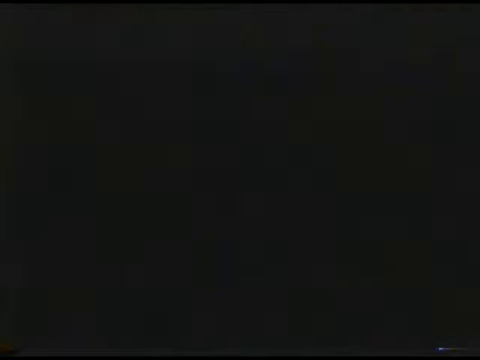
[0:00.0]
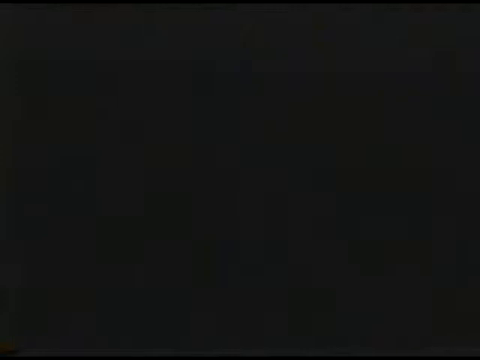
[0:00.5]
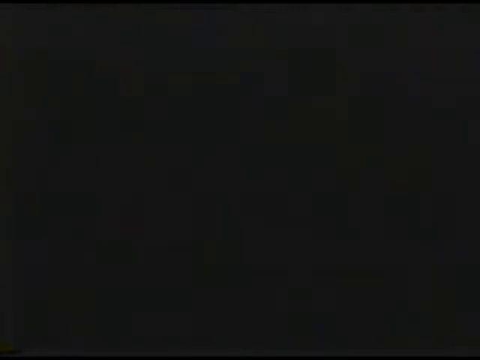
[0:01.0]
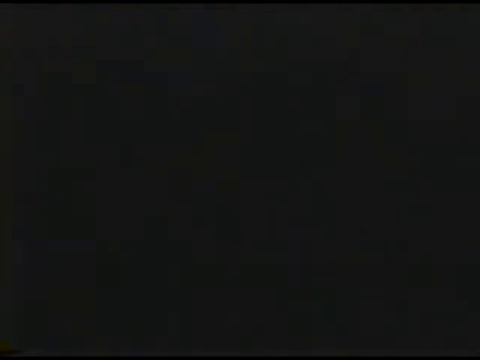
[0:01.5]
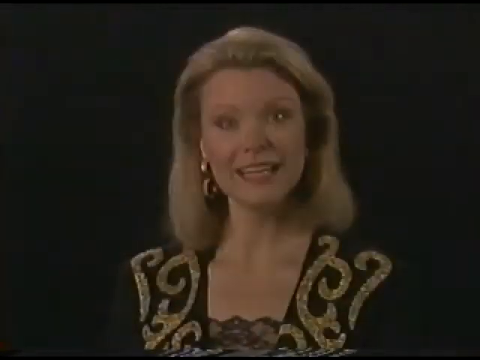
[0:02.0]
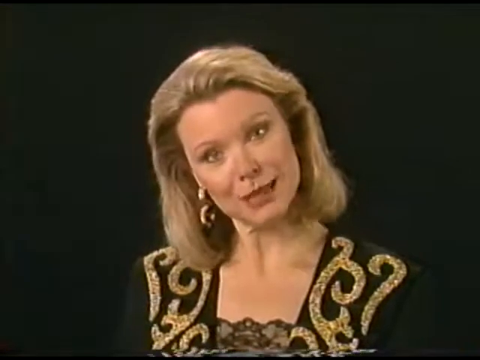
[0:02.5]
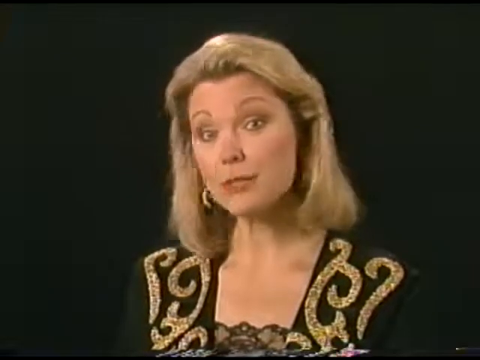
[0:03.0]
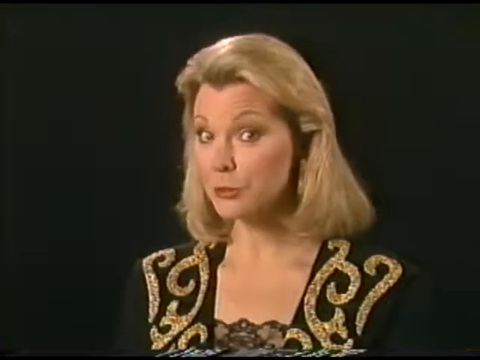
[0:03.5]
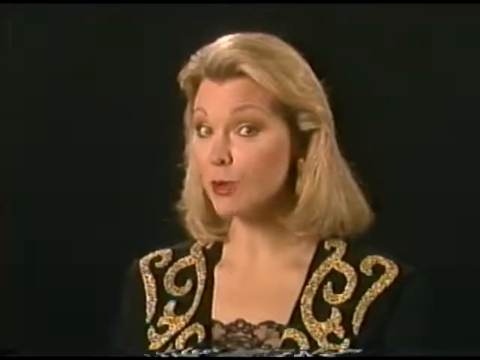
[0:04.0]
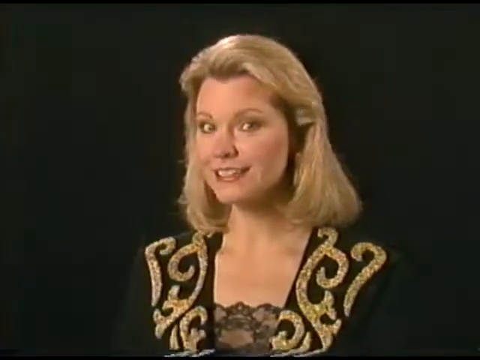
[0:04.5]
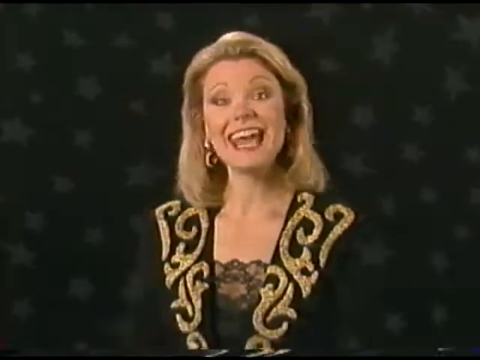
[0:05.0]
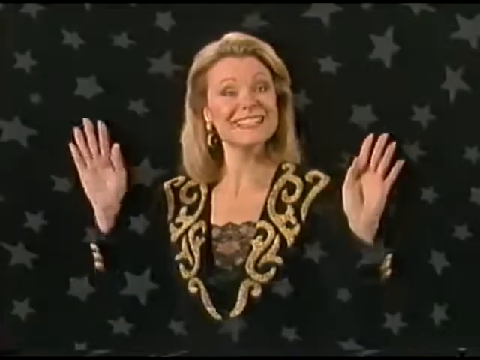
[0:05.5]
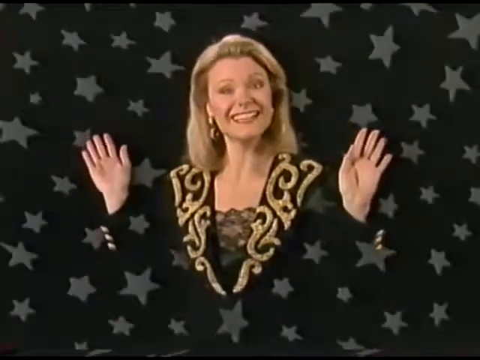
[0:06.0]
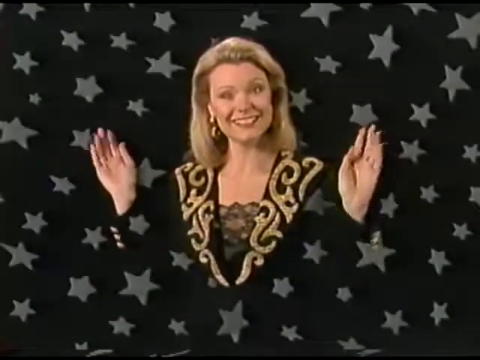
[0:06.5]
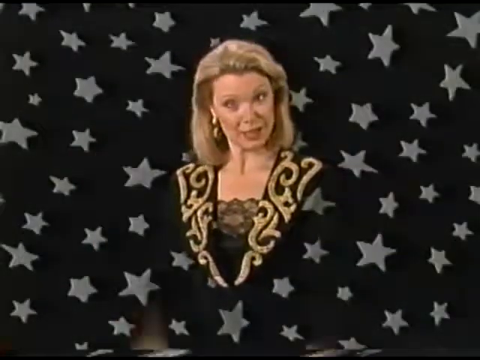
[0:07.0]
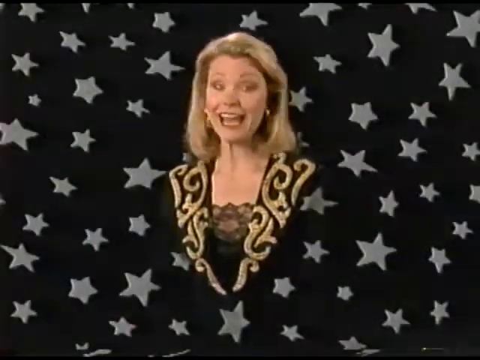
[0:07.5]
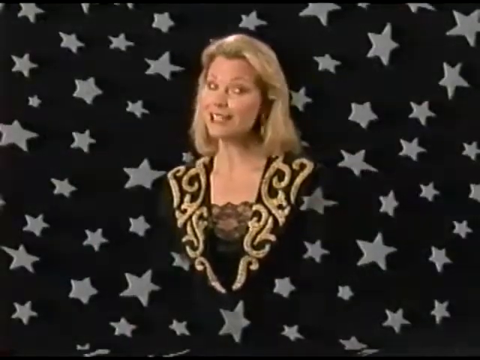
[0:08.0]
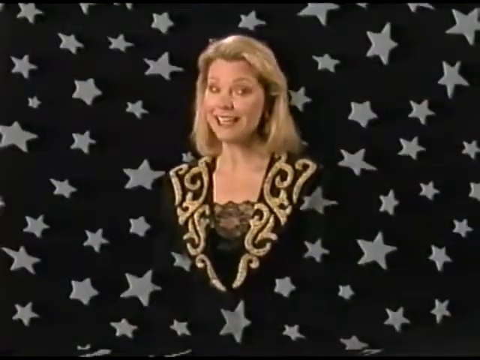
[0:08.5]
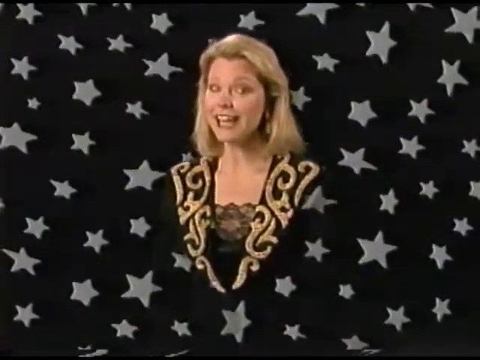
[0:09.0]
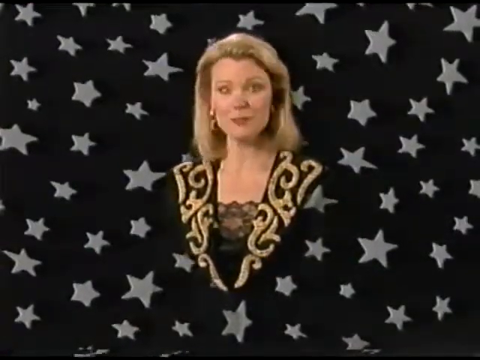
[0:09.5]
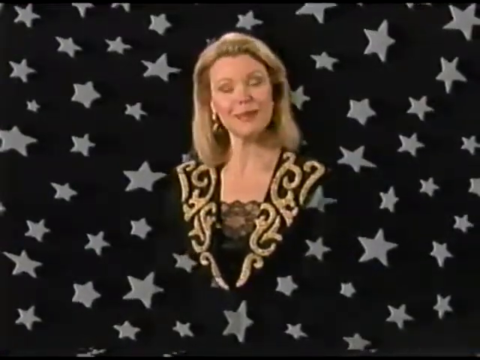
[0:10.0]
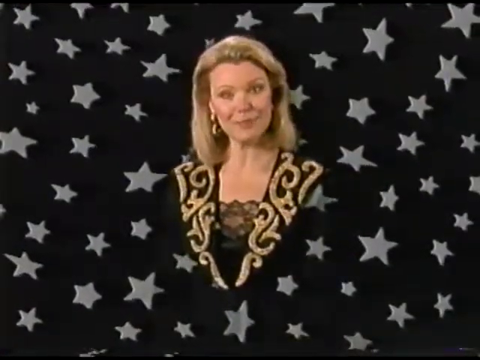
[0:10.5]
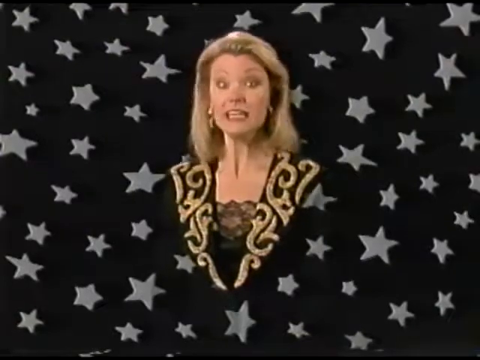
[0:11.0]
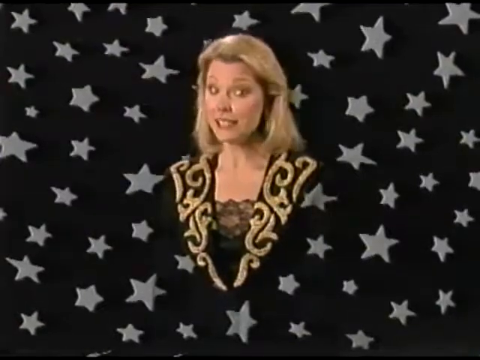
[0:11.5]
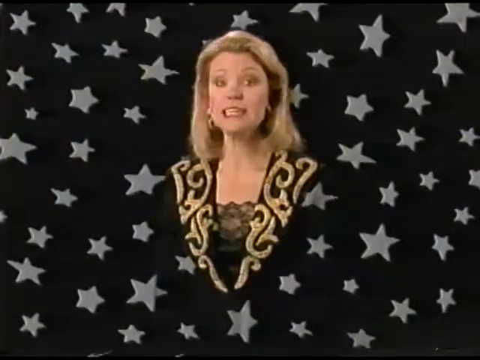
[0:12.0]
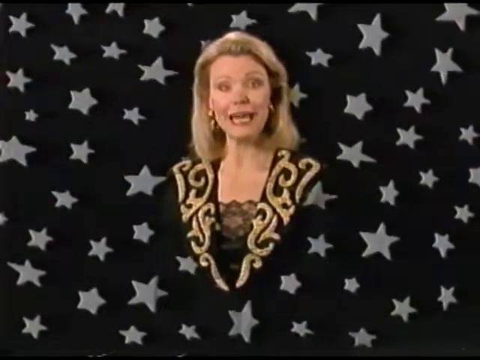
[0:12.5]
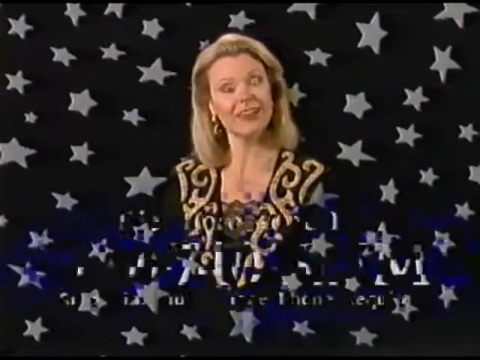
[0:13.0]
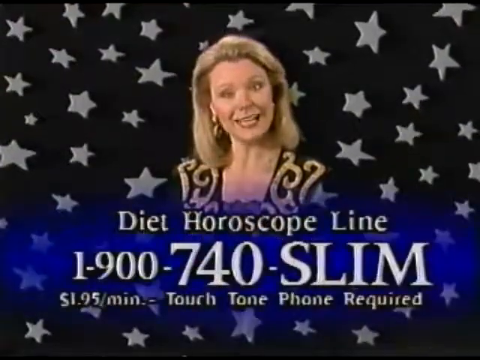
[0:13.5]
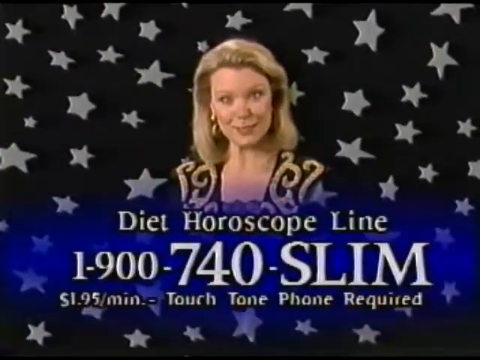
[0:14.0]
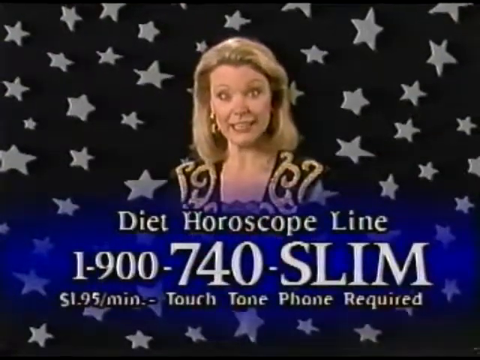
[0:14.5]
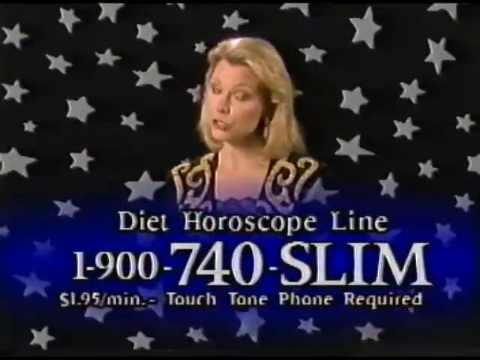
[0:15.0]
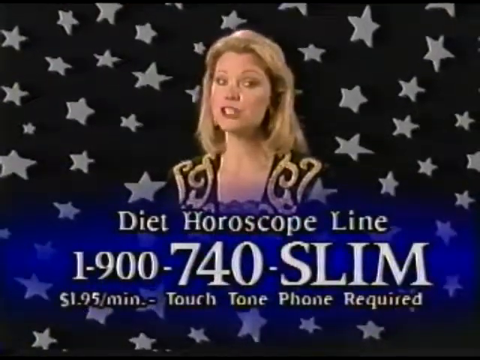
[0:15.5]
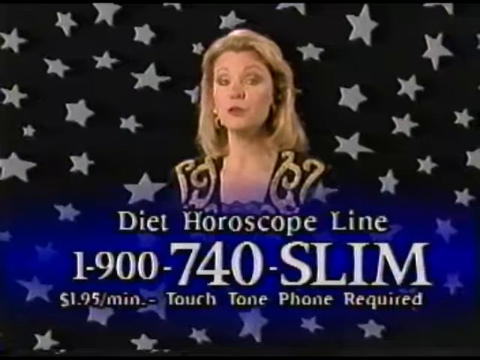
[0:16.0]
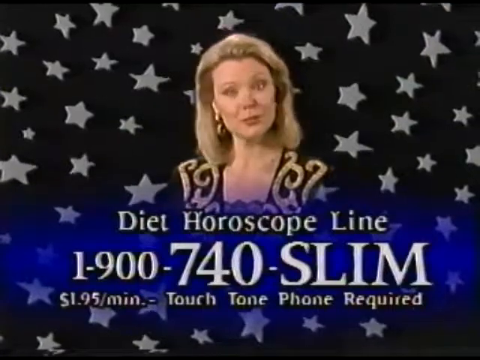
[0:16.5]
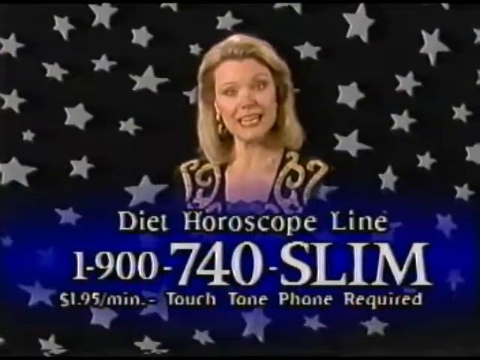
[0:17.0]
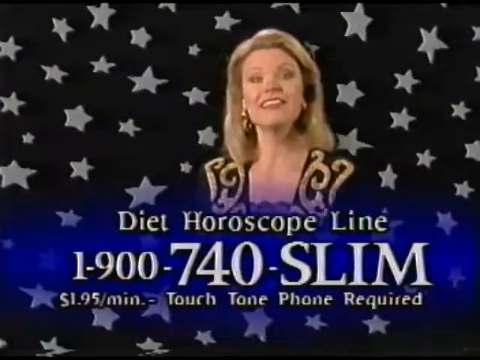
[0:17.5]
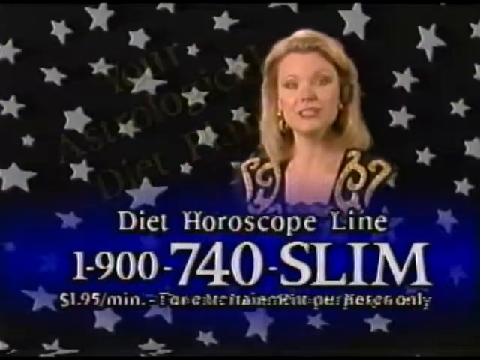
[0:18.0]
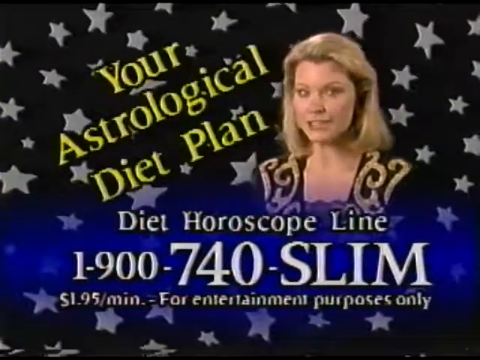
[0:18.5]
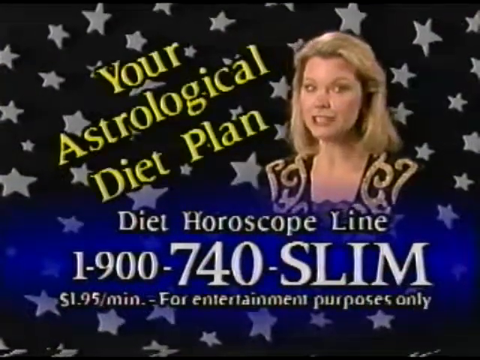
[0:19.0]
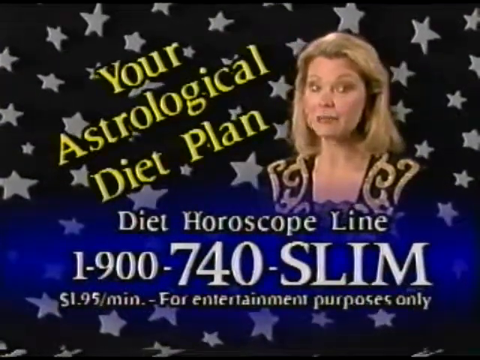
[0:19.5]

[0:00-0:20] The video is a square full of stars: a black background with white stars. A blonde woman is speaking. Then everything fades to black completely. She wears a black dress with gold. Nothing but her and her dress is visible until she holds her hands up; the rest of her body is faded into the background. Text reads "diet horoscope line," "1-900-740-SLIM," and "$1.95 a minute for entertainment purposes only." She is a blonde, middle-aged woman who apparently wants the viewer to call the line. The ad states that a Touchtone phone is required to get the astrological diet plan.